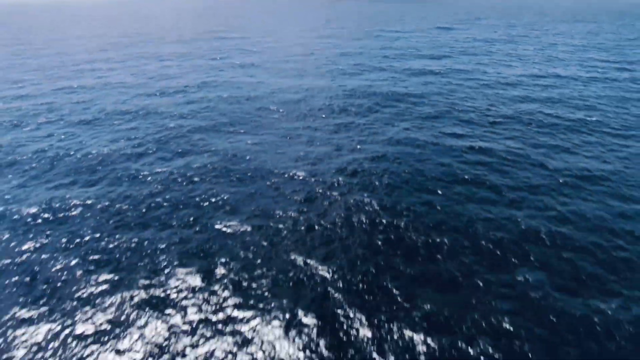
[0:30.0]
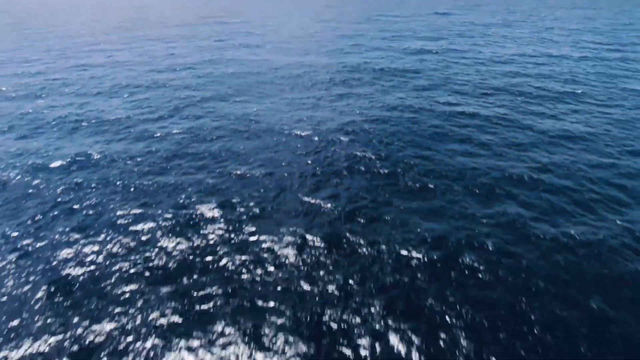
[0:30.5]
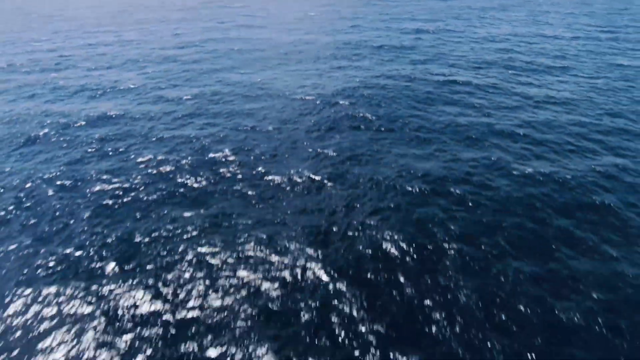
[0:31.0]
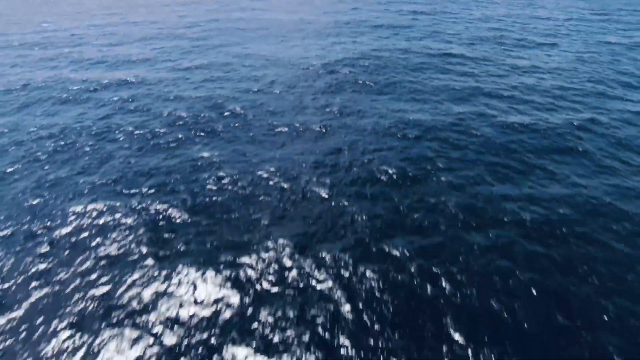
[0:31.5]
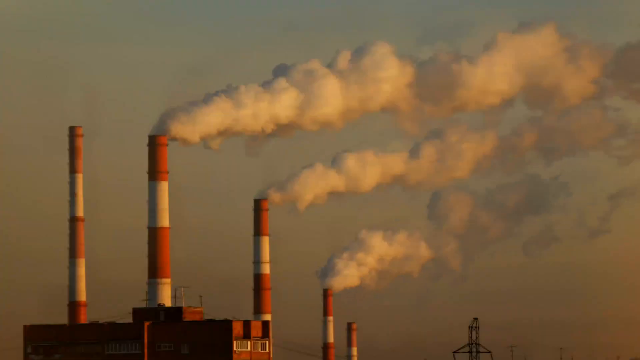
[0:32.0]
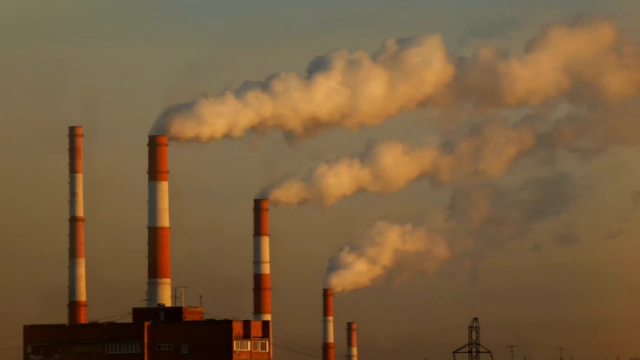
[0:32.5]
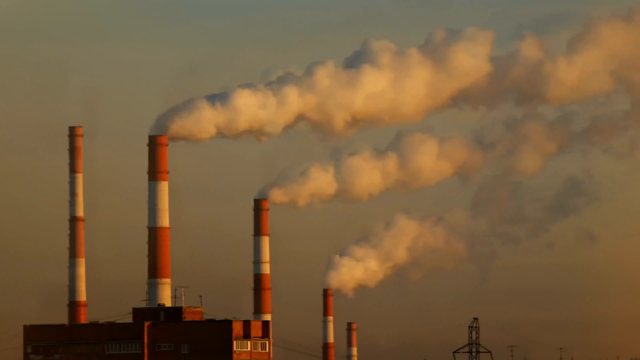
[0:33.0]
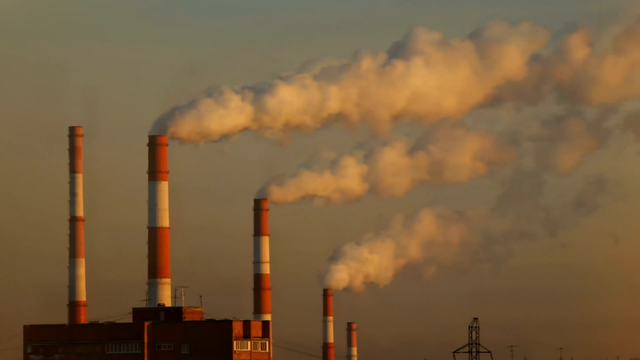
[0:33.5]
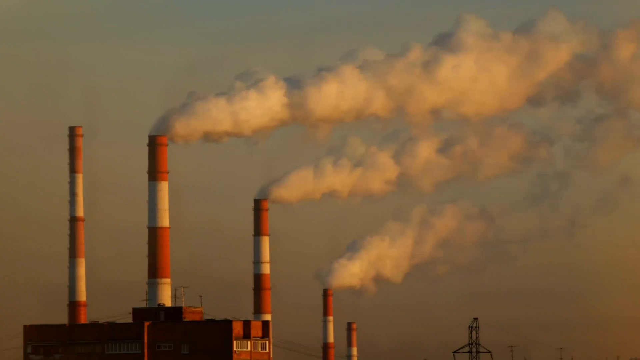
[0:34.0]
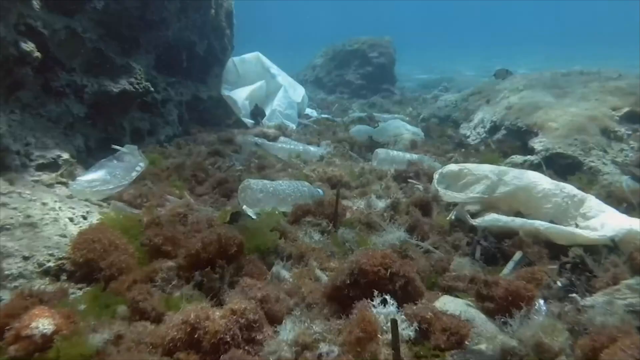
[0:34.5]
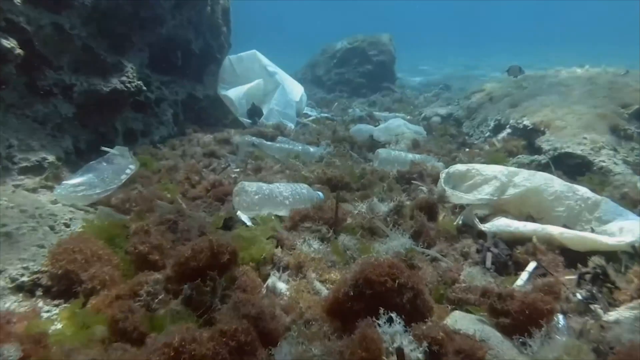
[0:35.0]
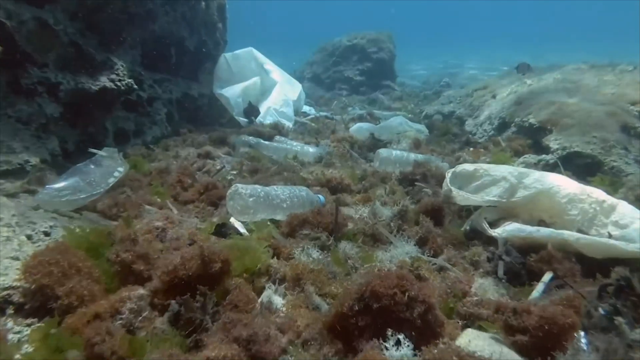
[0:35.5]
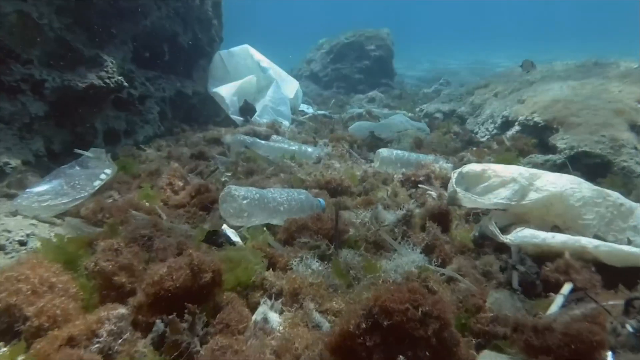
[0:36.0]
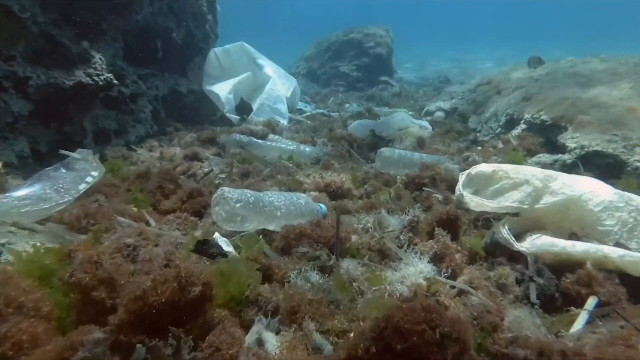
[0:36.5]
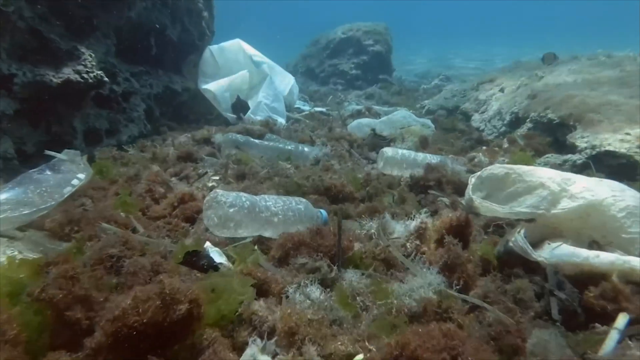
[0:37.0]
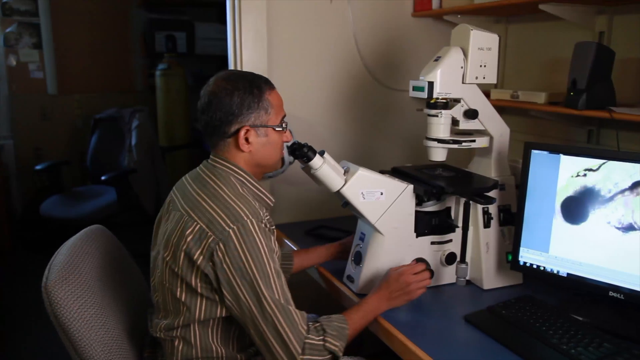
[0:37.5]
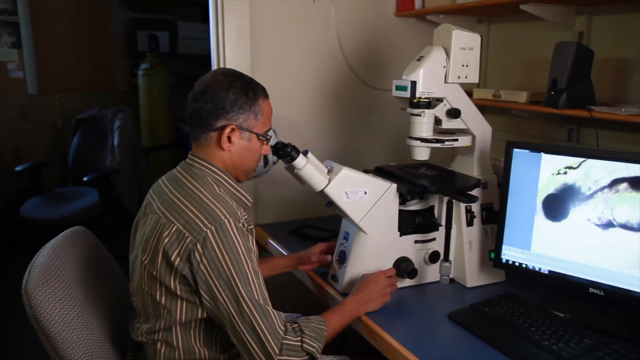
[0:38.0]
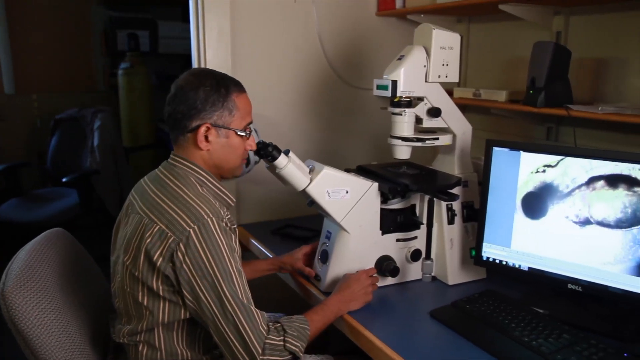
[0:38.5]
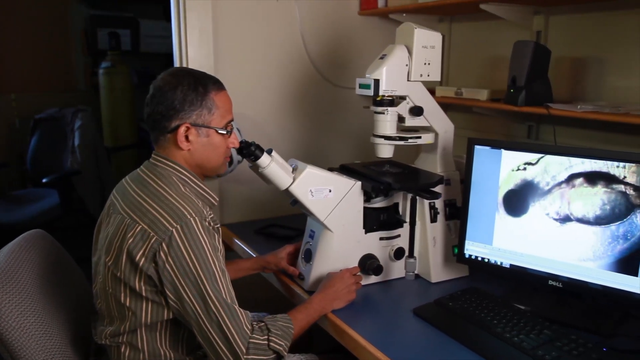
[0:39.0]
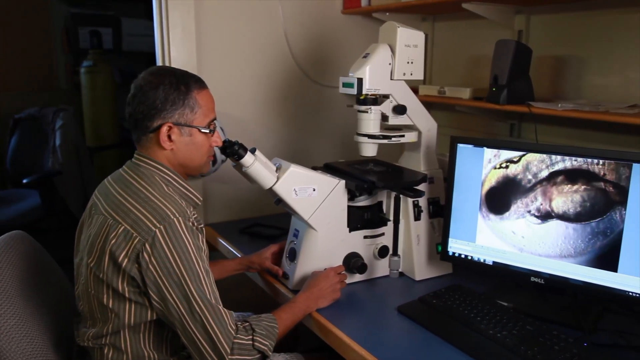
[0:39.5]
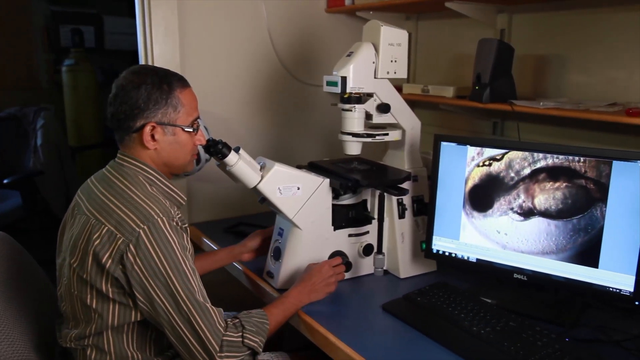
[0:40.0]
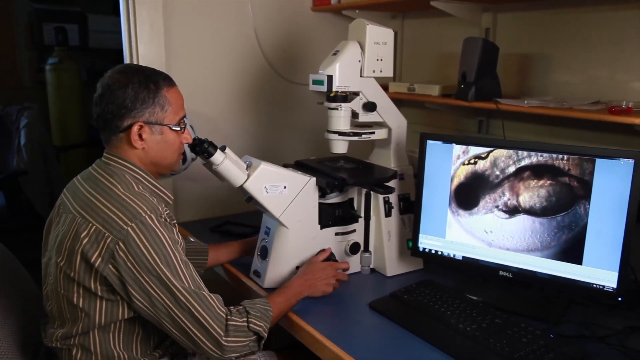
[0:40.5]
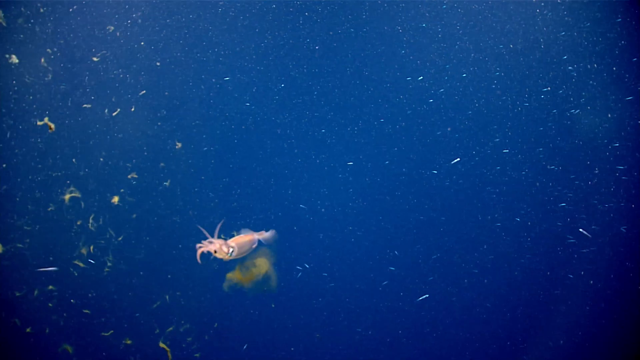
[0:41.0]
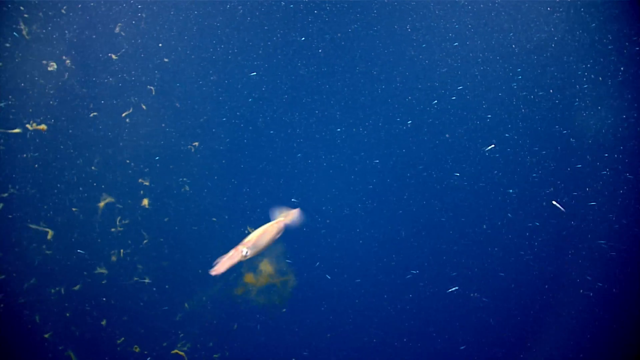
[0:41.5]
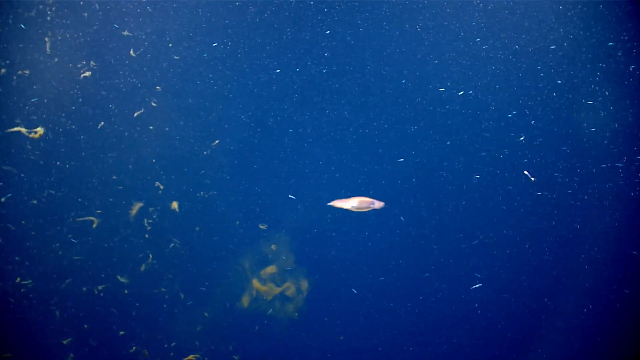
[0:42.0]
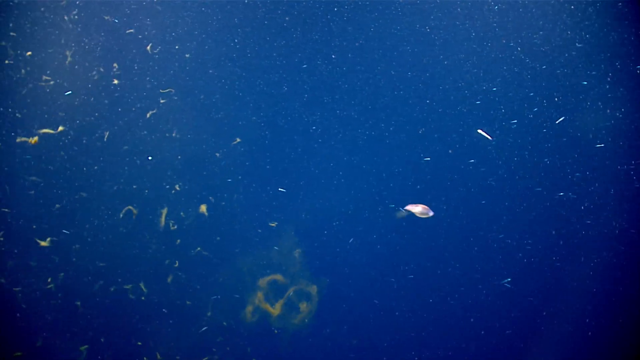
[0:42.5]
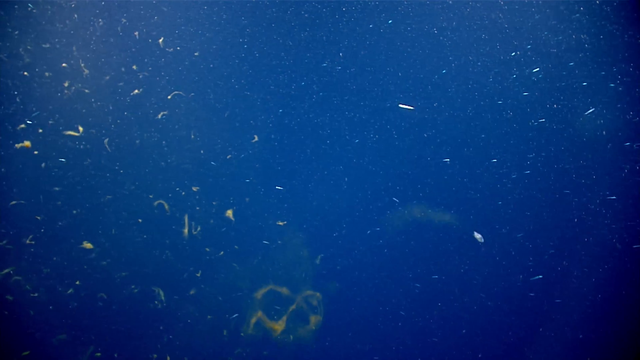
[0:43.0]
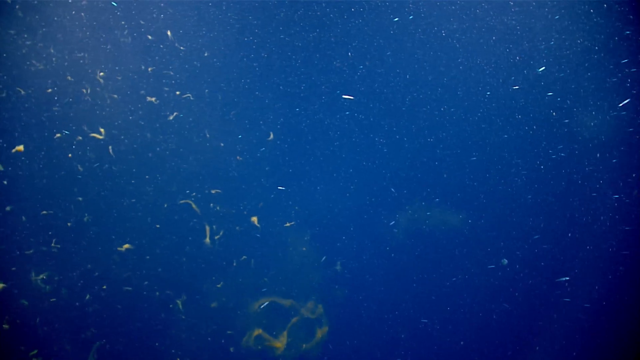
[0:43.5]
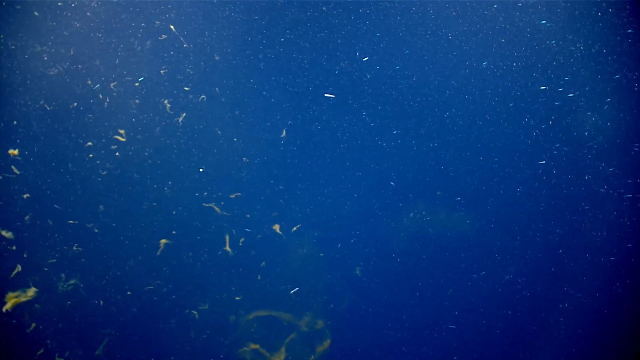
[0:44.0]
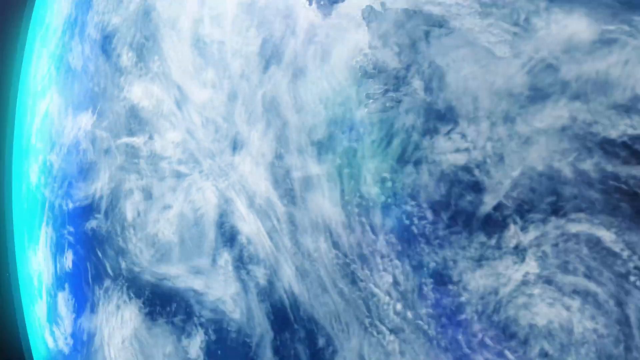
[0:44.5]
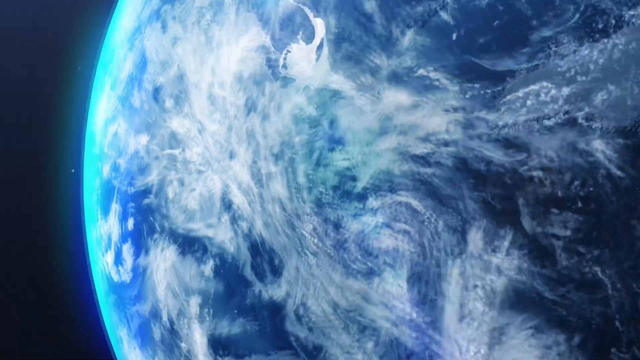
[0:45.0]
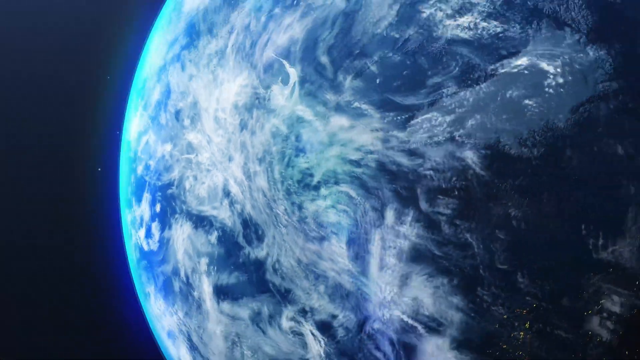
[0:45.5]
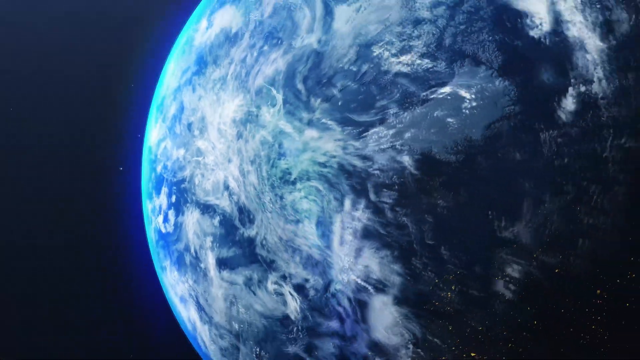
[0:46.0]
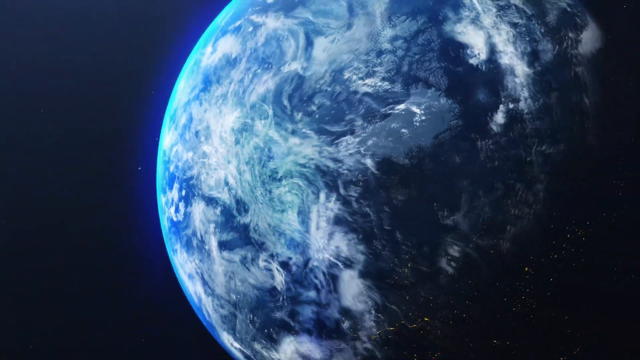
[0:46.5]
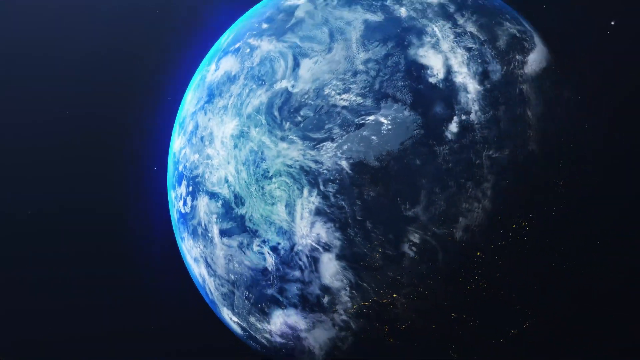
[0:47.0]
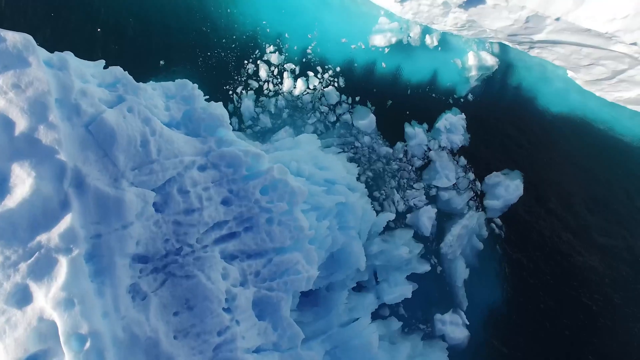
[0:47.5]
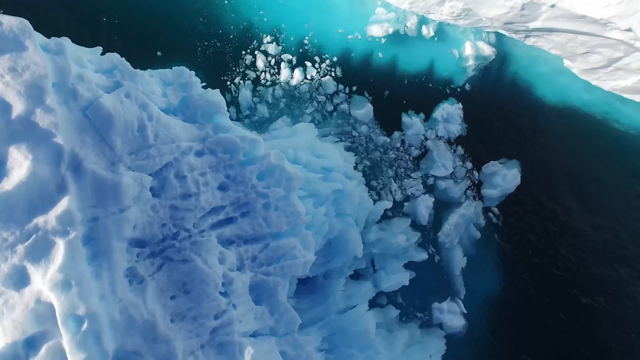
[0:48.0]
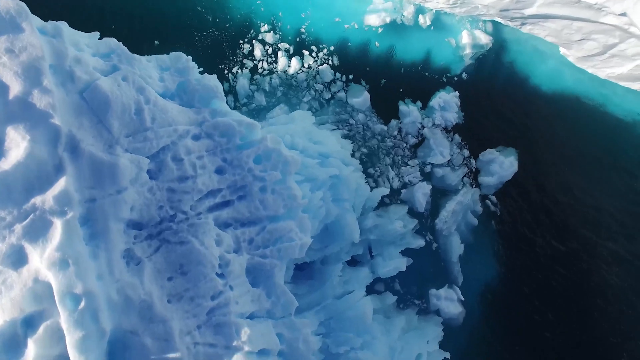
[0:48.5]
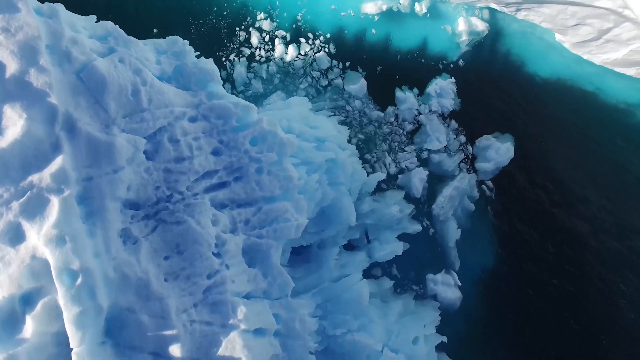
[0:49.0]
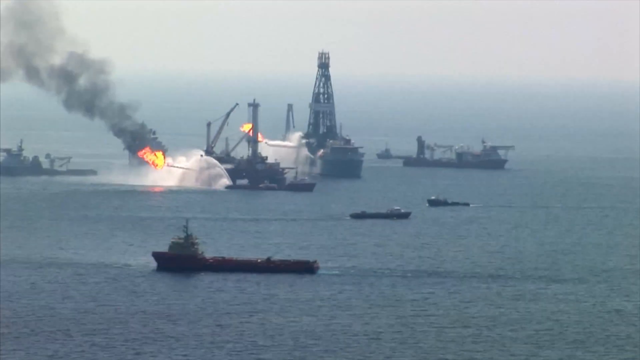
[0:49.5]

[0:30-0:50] Four red and white poles release large smoke. The view moves underground, where bottles and other thrown-away things litter the sea. A researcher holds a machine and seems to be viewing something on its screen. Small fish swim around freely in a clean environment. The video then shows the earth, followed by a place with a lot of ice on very blue water.